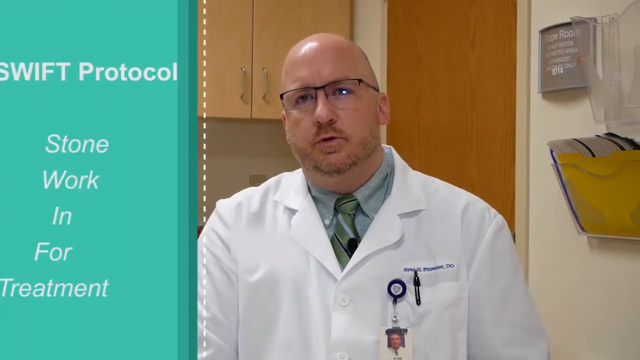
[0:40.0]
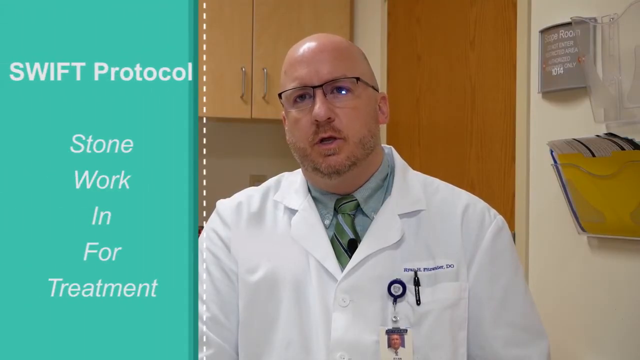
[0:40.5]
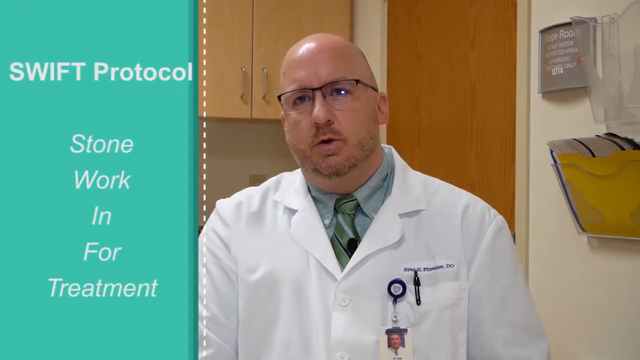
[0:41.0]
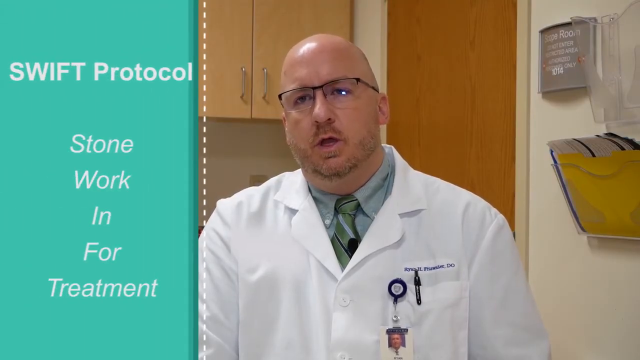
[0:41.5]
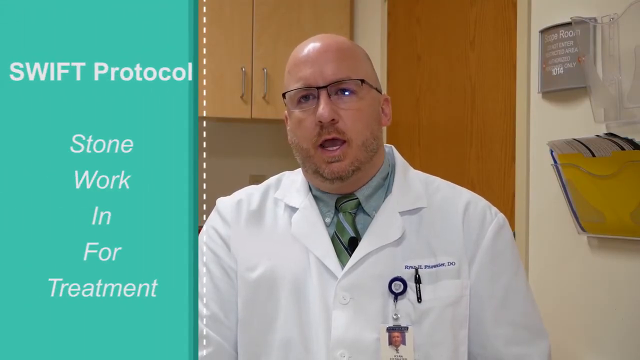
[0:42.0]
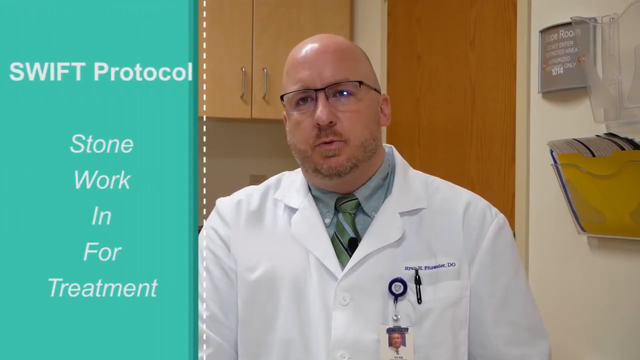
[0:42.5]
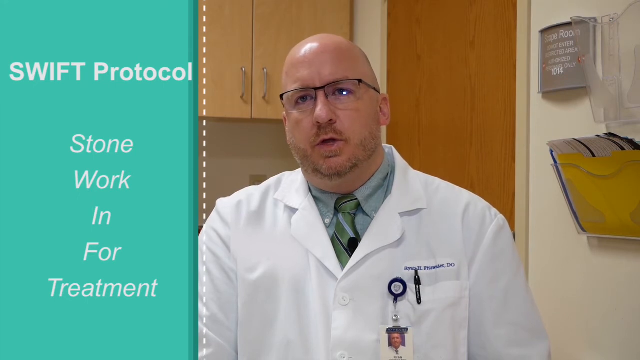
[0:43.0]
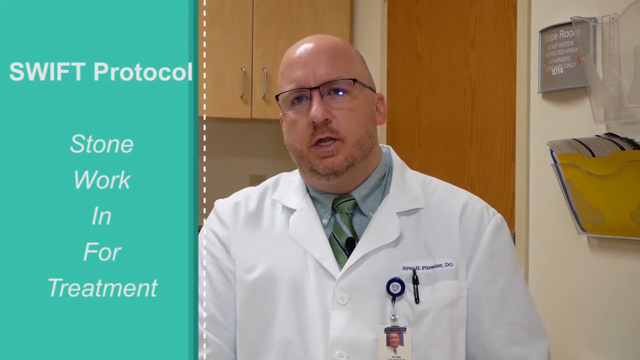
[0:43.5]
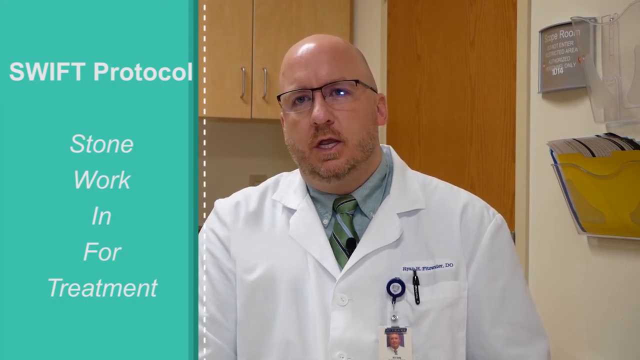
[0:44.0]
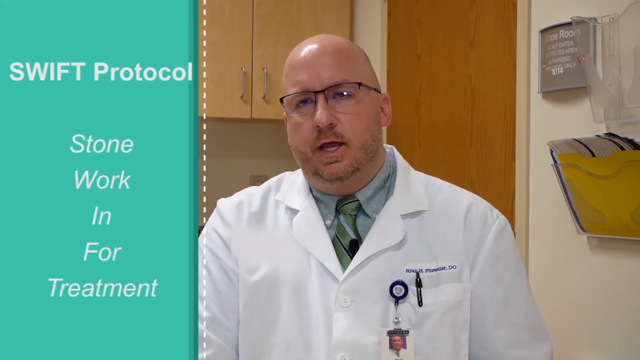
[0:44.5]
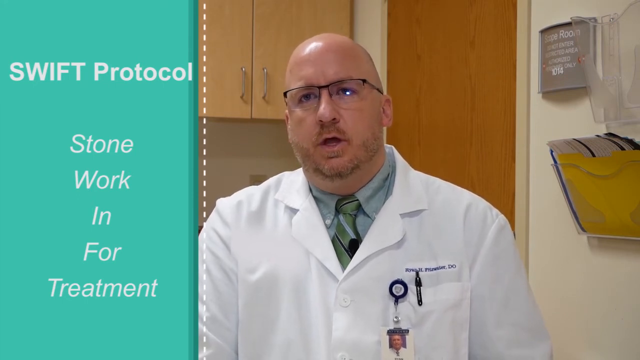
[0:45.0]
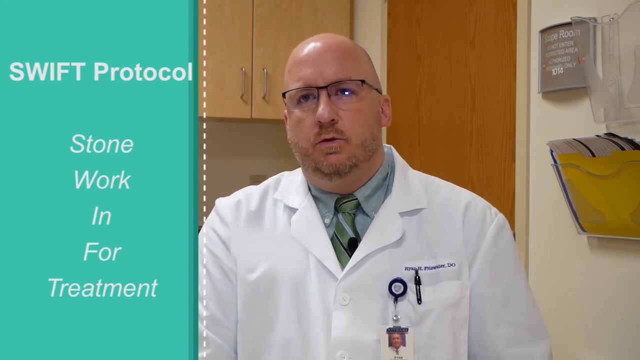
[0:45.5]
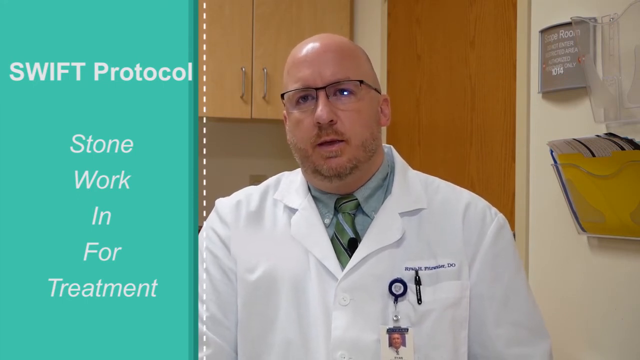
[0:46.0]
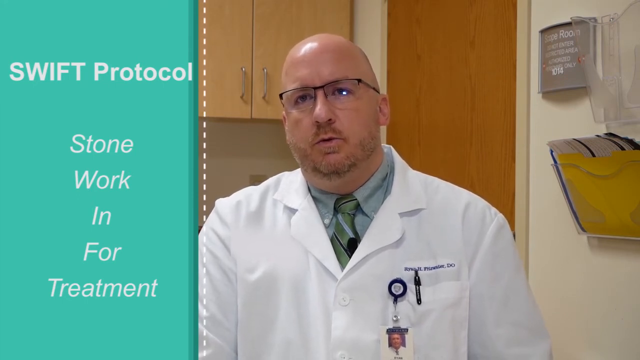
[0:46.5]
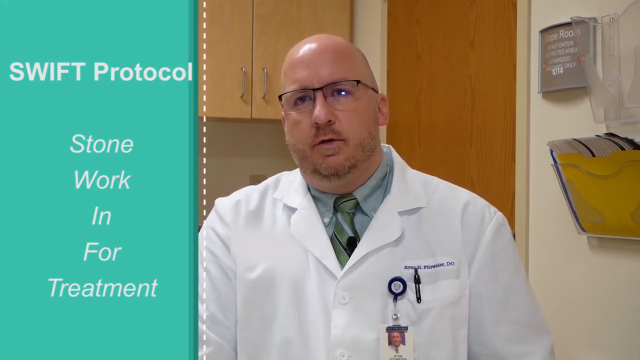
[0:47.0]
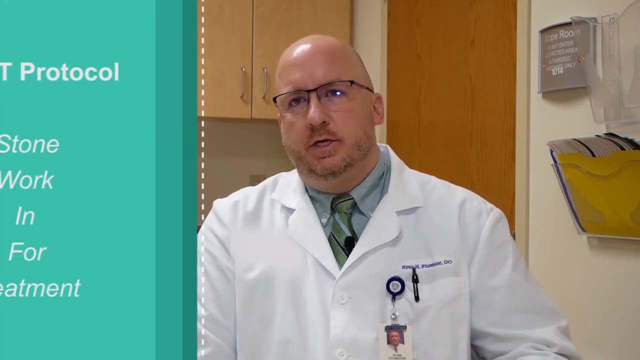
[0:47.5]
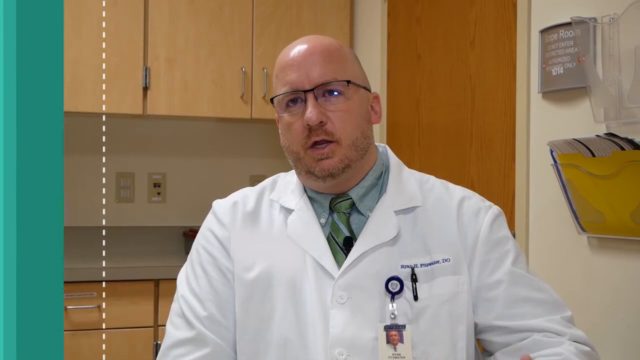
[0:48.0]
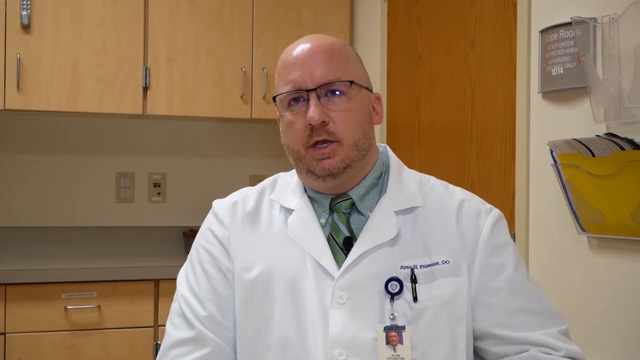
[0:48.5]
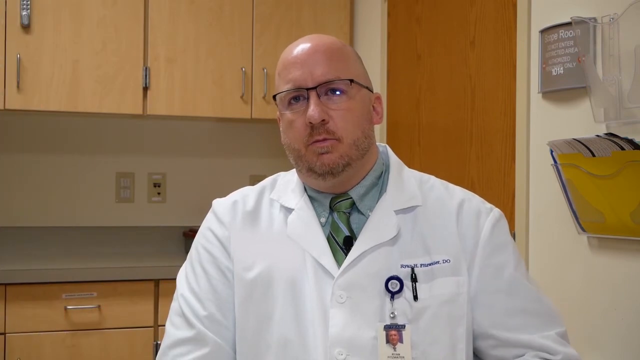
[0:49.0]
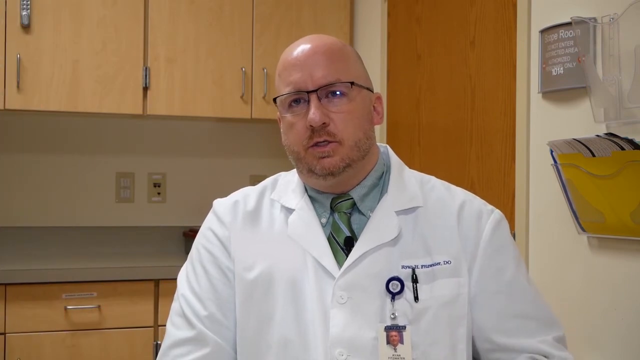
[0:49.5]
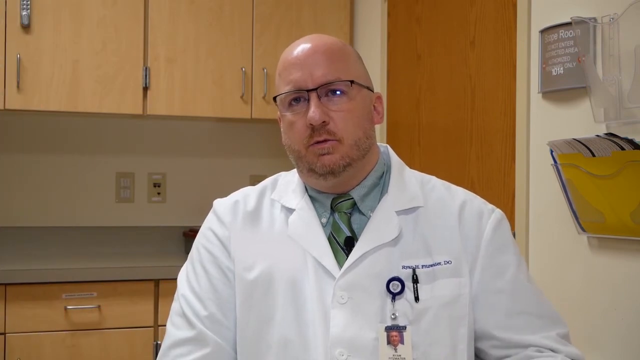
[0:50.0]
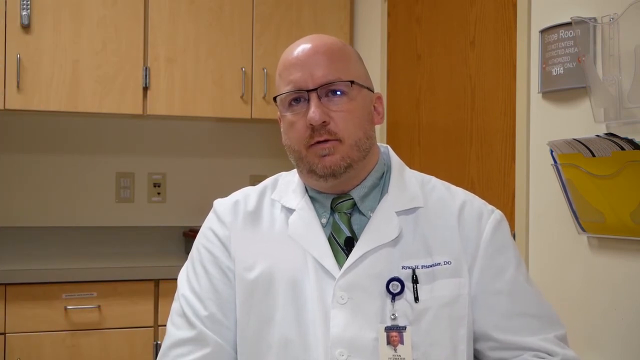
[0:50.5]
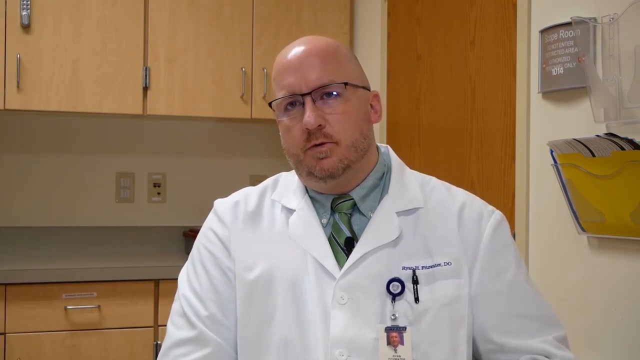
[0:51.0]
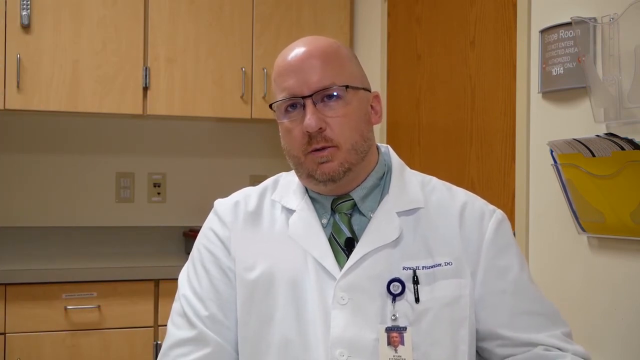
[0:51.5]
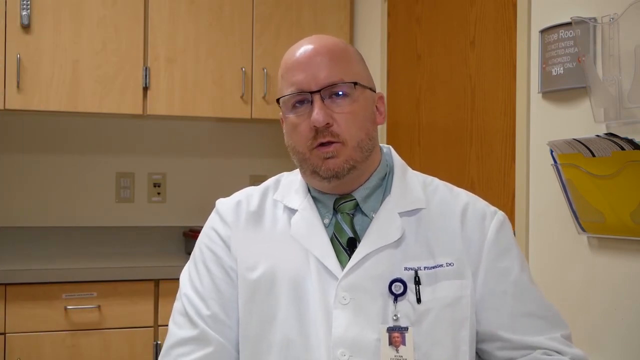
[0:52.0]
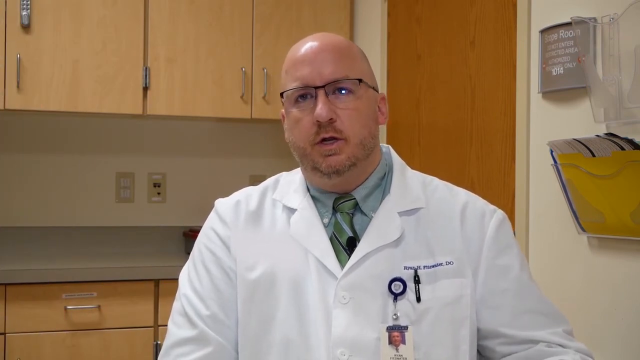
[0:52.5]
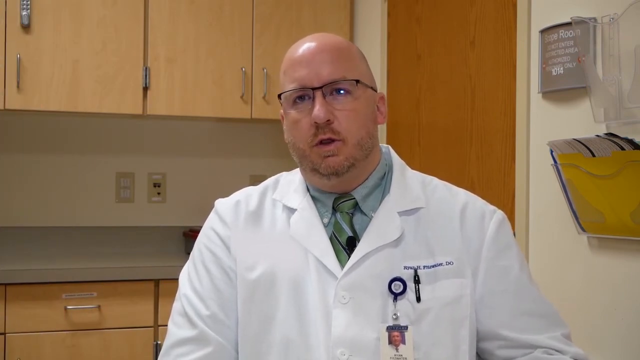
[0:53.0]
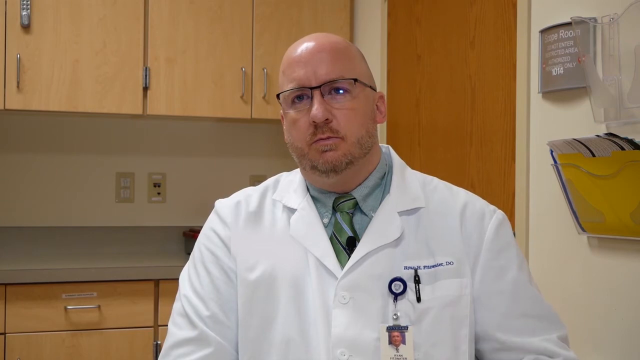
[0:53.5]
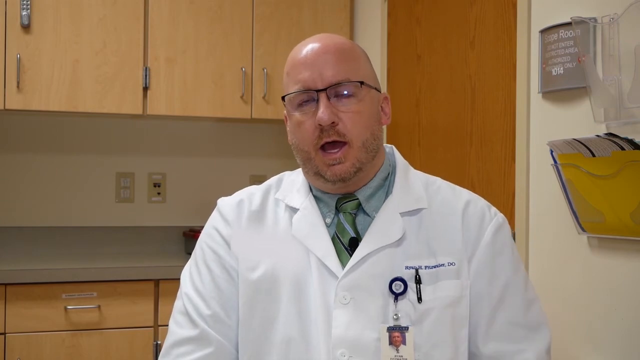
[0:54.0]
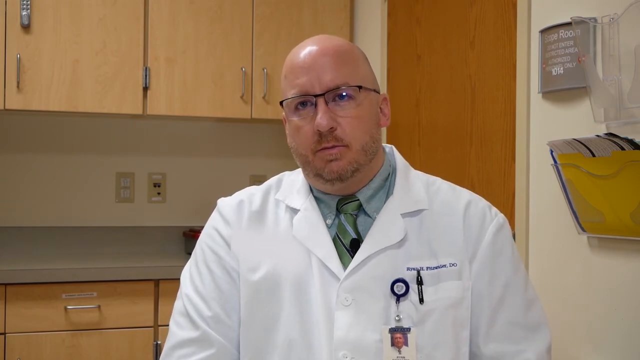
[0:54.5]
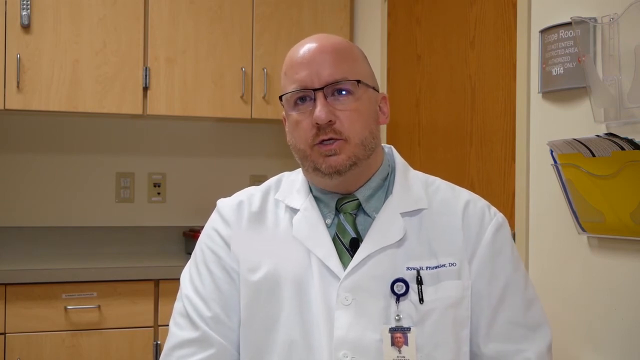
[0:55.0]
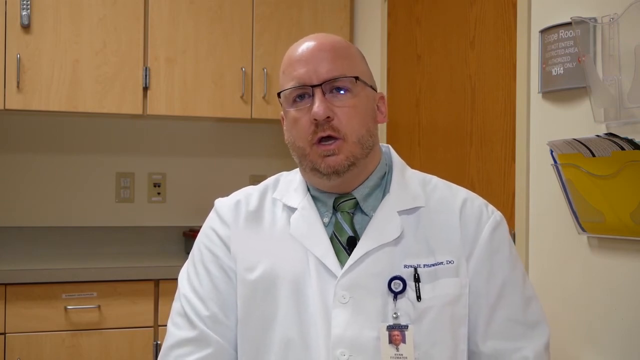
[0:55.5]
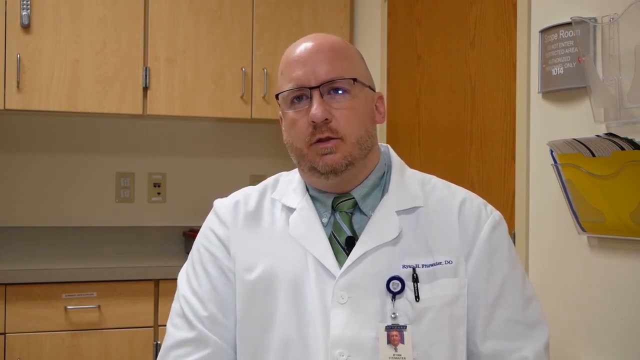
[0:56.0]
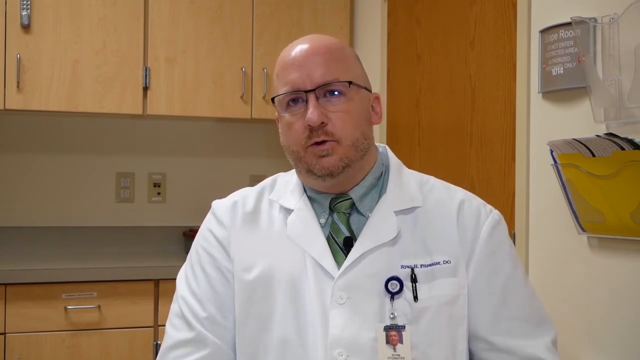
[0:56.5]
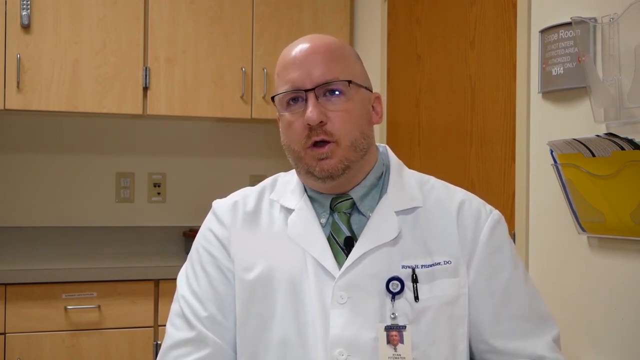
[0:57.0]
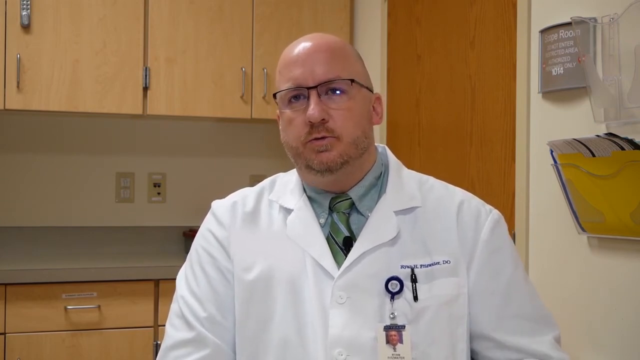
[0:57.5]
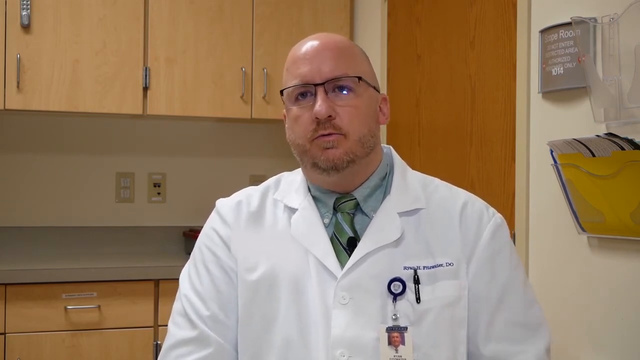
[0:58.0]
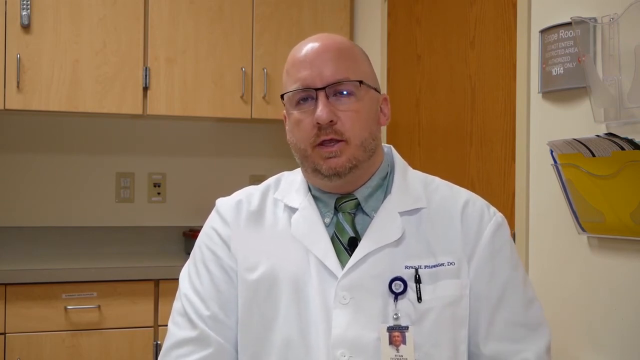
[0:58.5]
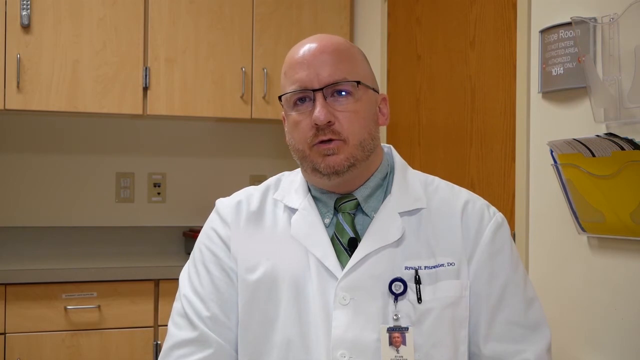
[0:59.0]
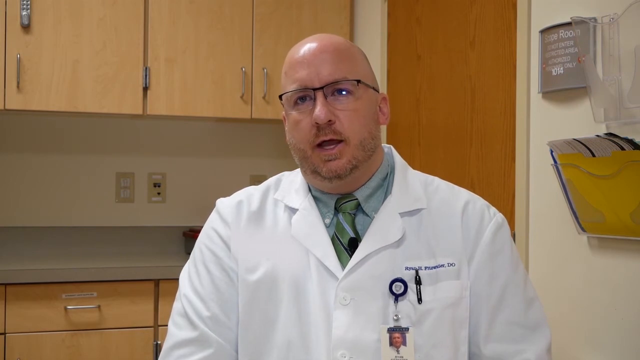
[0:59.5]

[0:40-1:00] The doctor continues to talk, facing the viewer and looking upward to the left. Words appear on the left side, reading "SWIFT protocol". He wears a white lab coat. Behind him is a wooden door, and behind his head to the left is a wooden cabinet. To the right, papers in a folder hang on a white wall. The words on the left disappear as the doctor keeps talking. In the top right corner, a small gray square sign on the wall reads "scope room. Do not enter restricted area. Authorized personnel only." To the right of this sign is a clear file holder mounted on the wall.